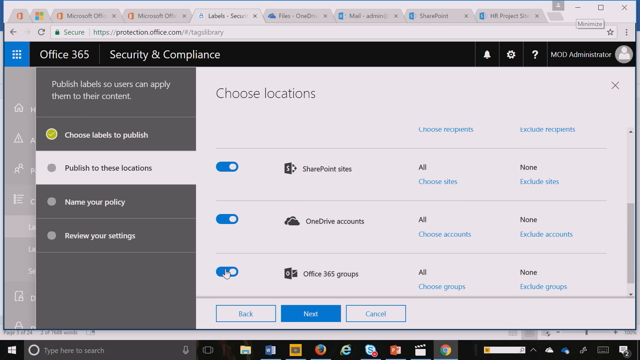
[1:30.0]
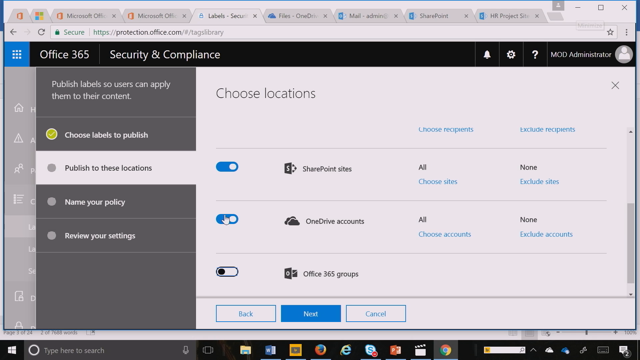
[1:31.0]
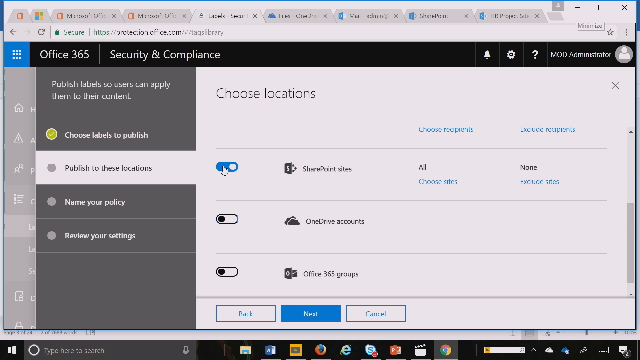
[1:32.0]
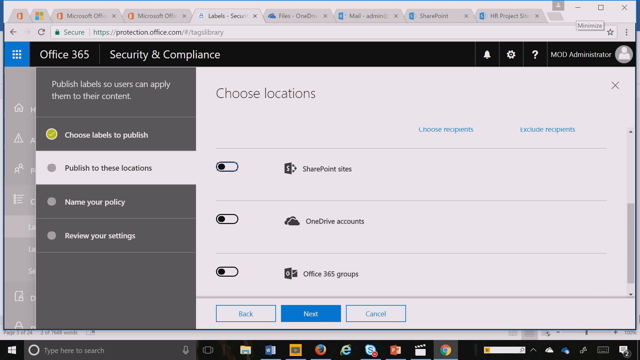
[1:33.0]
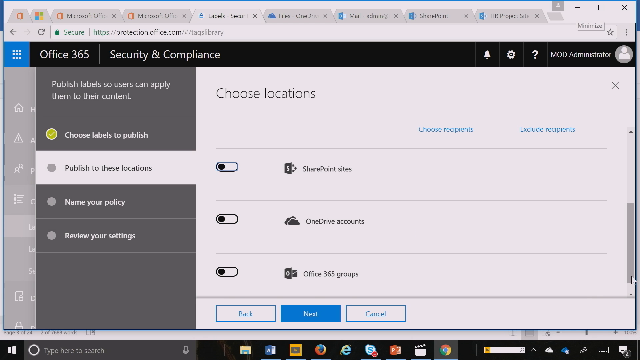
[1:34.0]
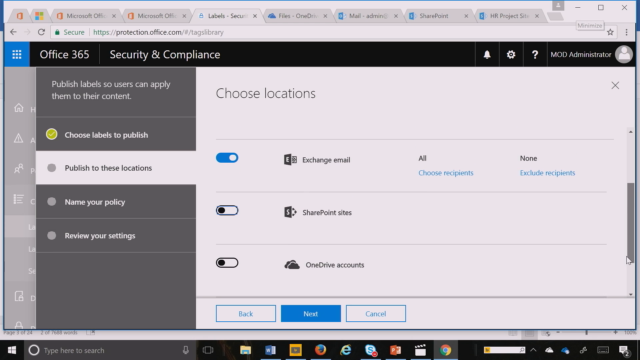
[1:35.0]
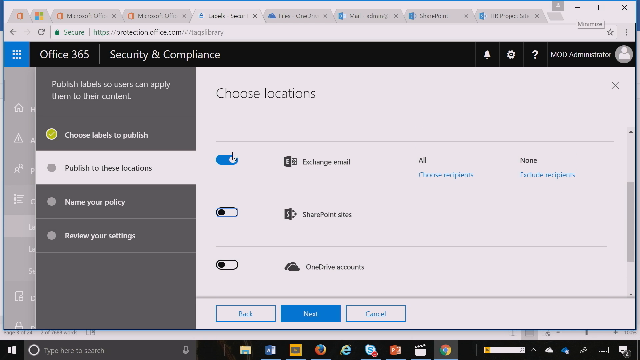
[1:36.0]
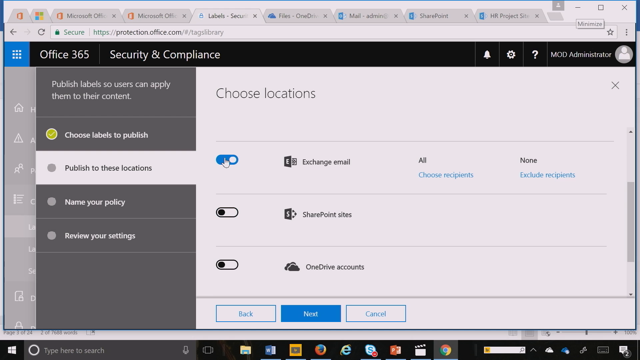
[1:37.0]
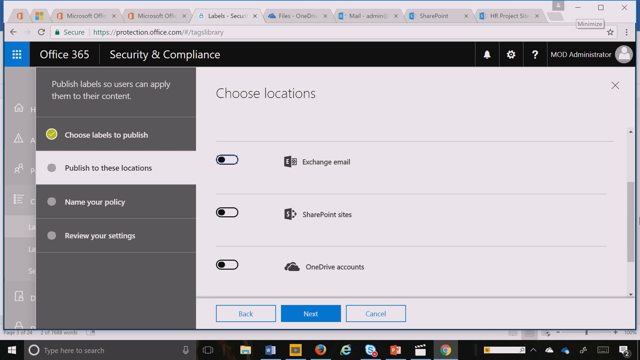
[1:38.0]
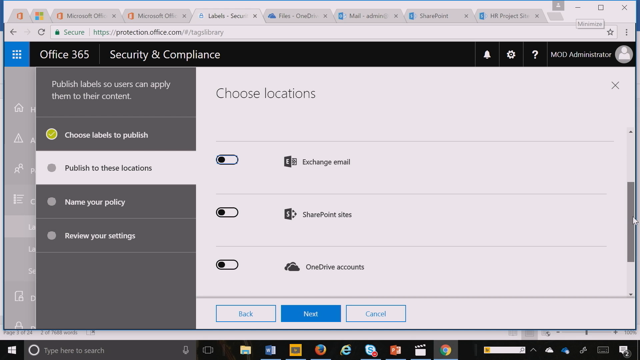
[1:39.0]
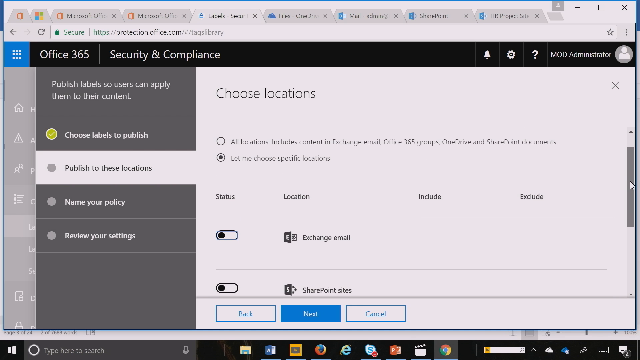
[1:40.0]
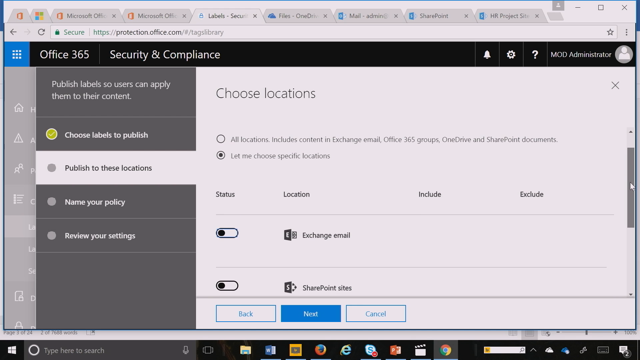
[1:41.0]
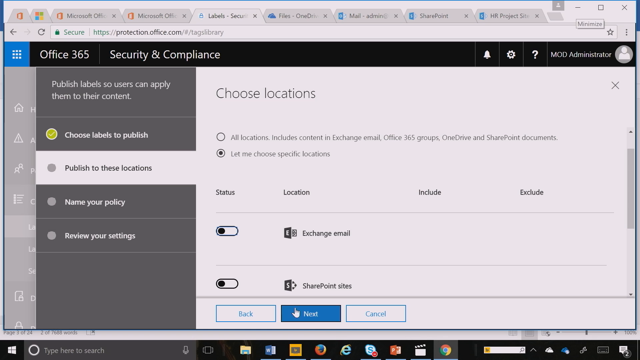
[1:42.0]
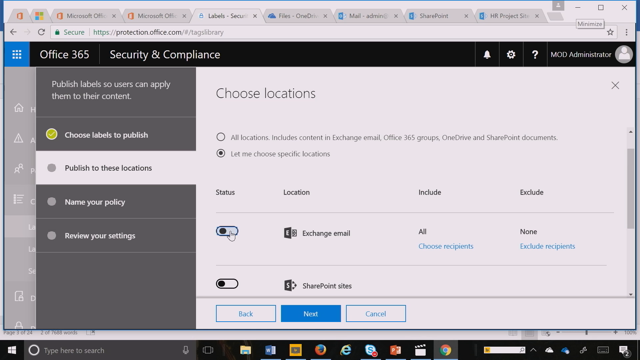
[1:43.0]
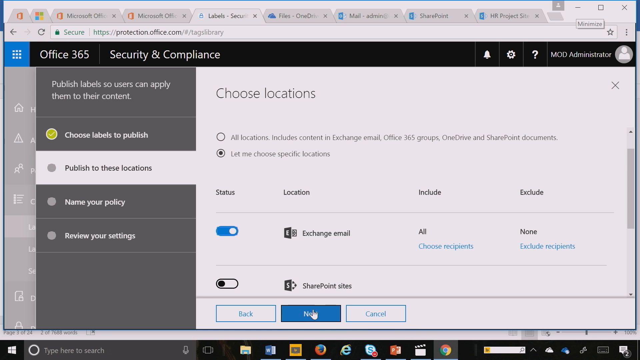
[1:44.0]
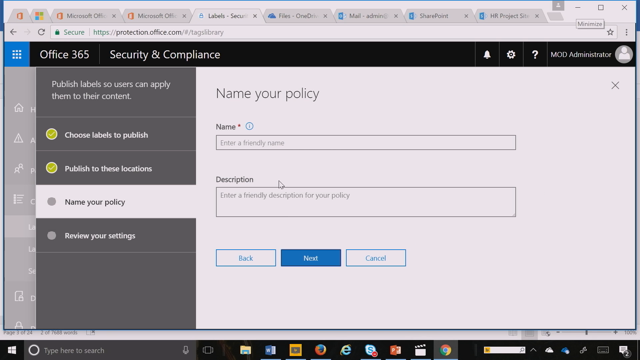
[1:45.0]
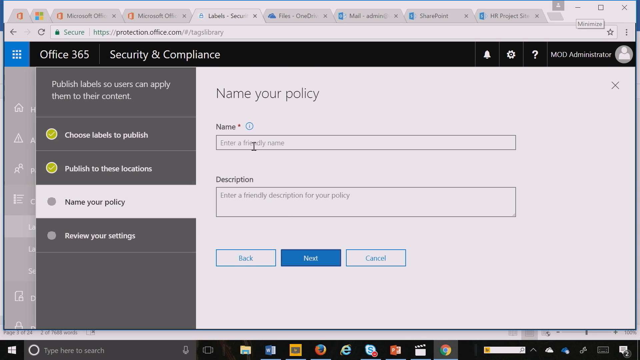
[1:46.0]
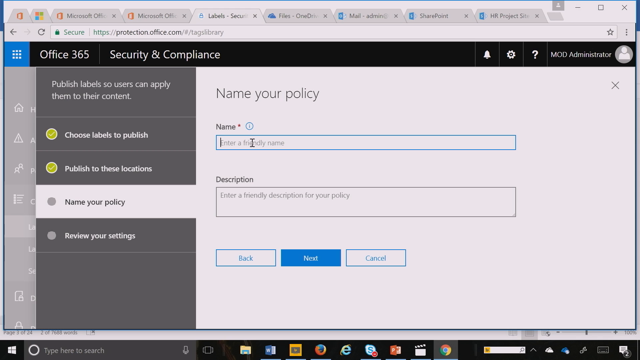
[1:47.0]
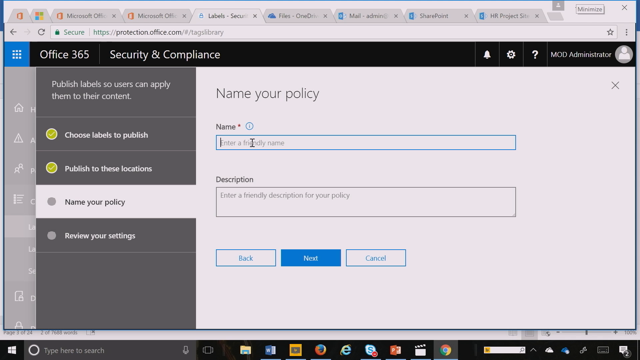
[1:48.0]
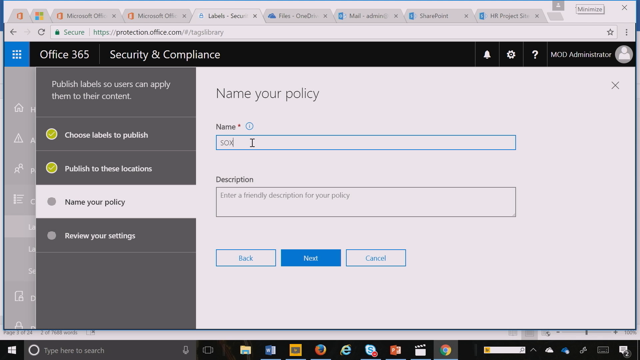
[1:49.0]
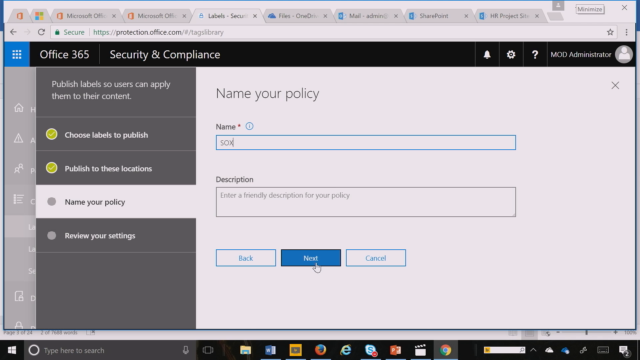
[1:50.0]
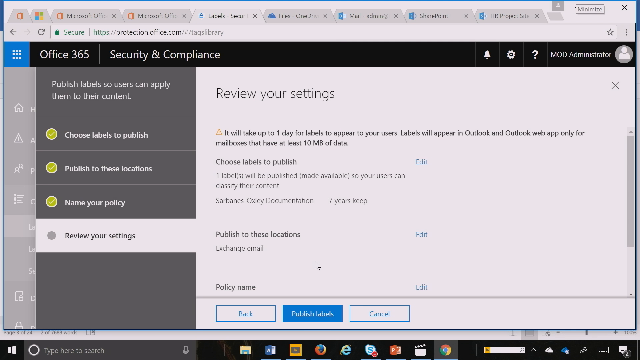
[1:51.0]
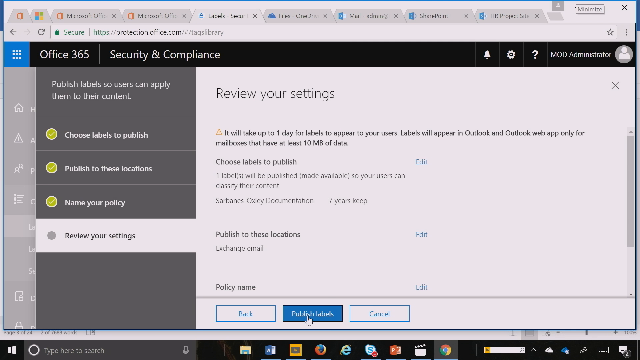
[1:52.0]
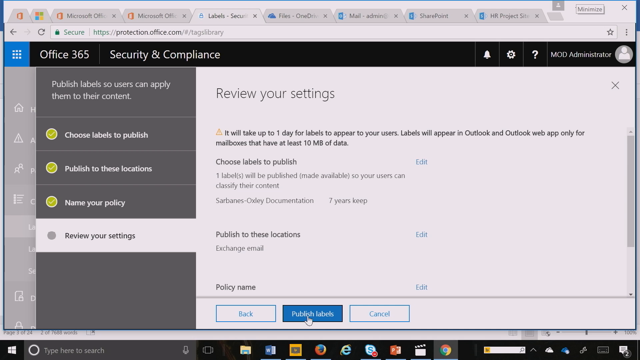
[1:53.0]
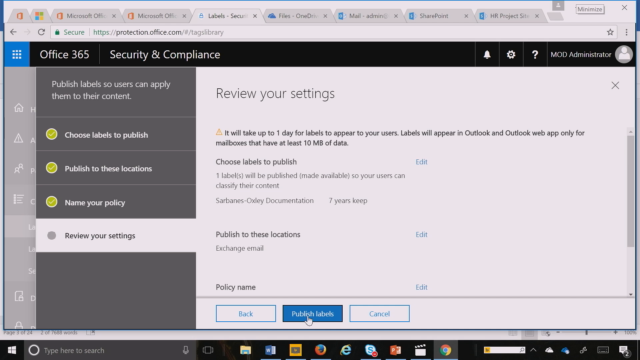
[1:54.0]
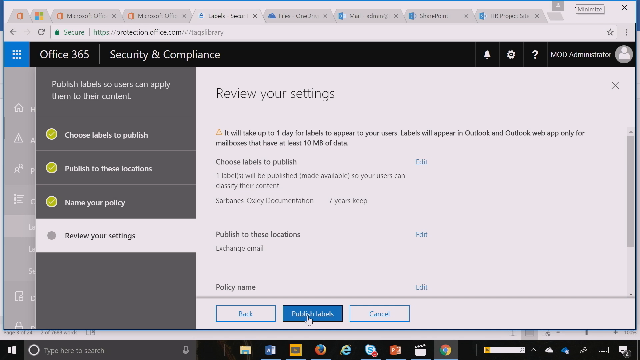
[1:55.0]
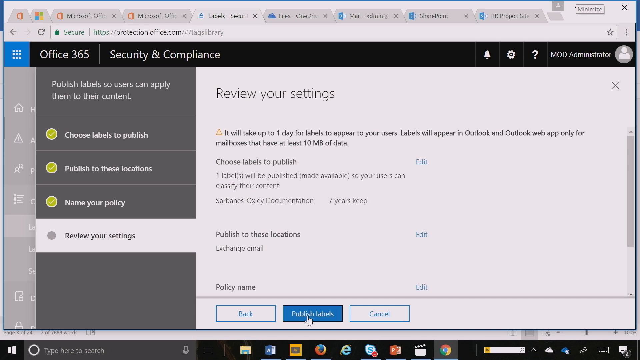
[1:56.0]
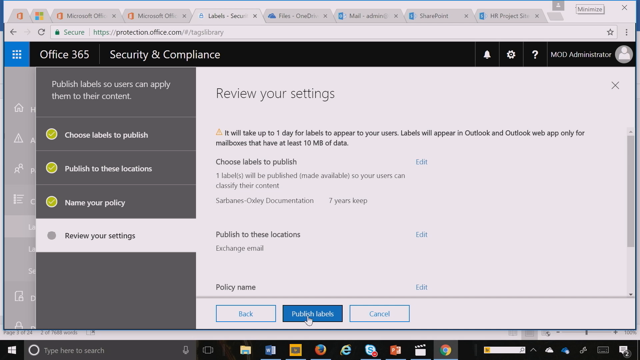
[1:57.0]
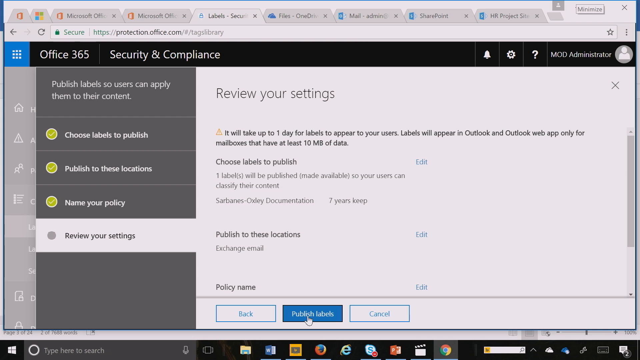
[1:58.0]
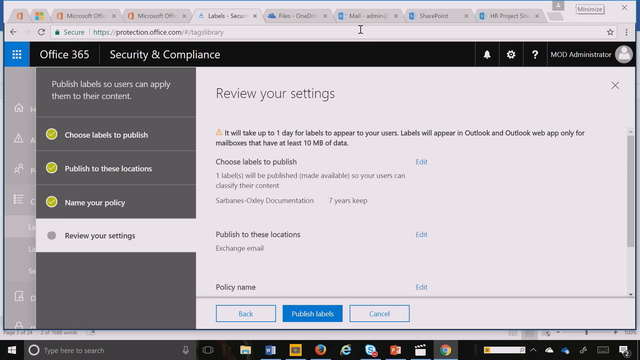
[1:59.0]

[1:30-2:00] The screen has a black bar at the top with text reading "Office 365 Security Compliance" and a menu underneath, with one option highlighted in white. A header reads "choose locations". A cursor toggles a button next to black text reading "OneDrive accounts", then toggles another button above it reading "SharePoint sites". Scrolling up, the person toggles another button; they seem to be toggling everything off. They click "Exchange email" and turn it off, continue scrolling up, and then turn "Exchange email" back on. They click at the bottom of the screen on a button reading "Next", after which a header reading "Name your policy" appears.